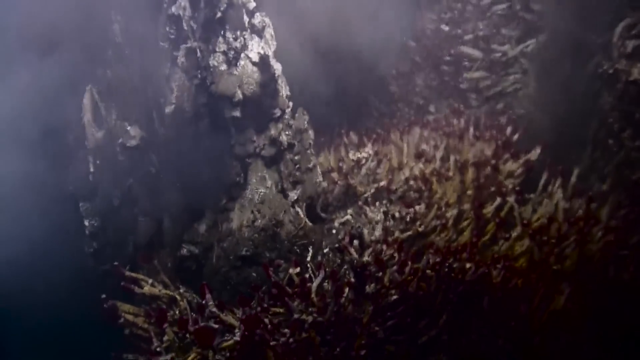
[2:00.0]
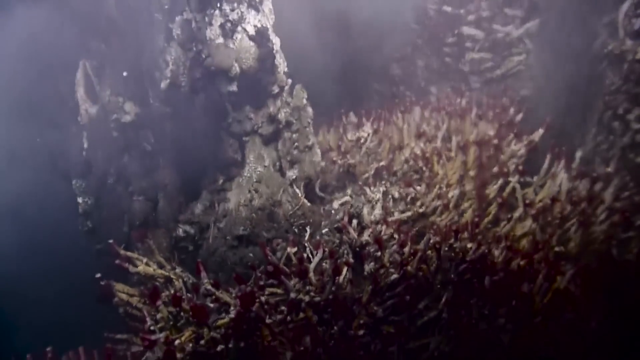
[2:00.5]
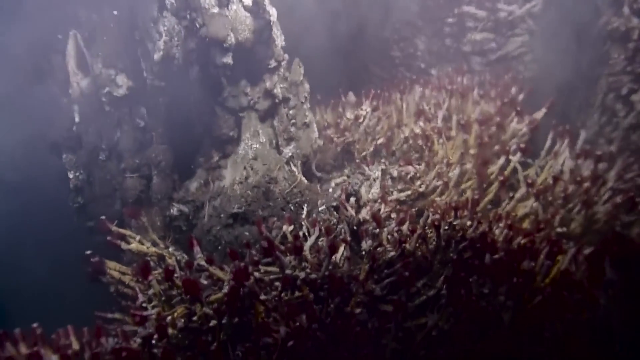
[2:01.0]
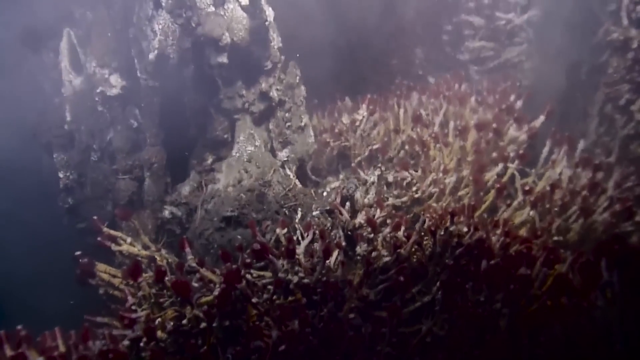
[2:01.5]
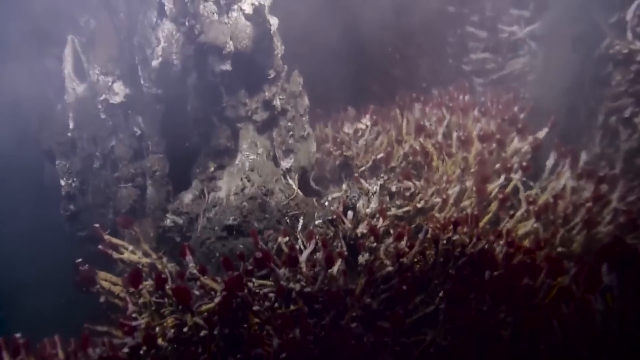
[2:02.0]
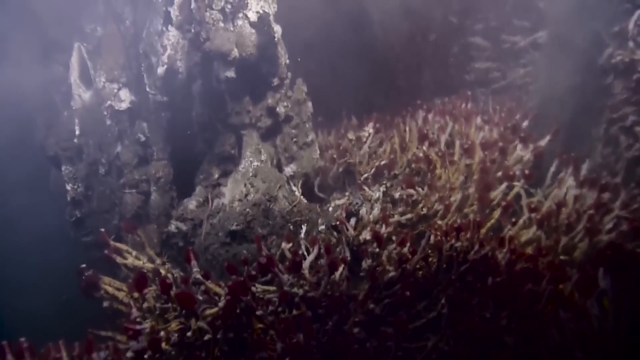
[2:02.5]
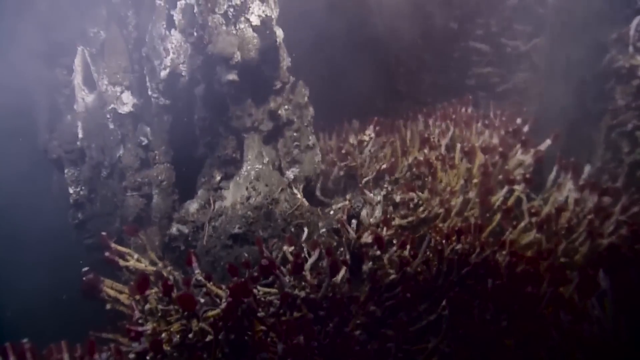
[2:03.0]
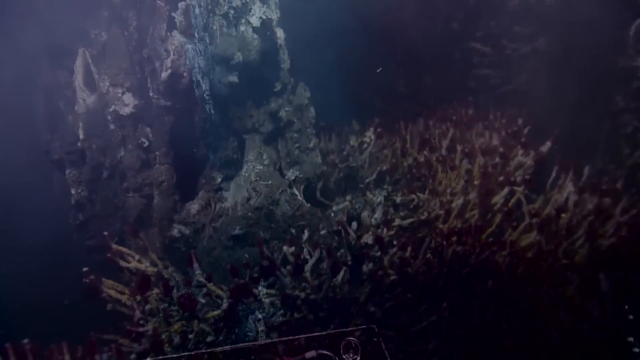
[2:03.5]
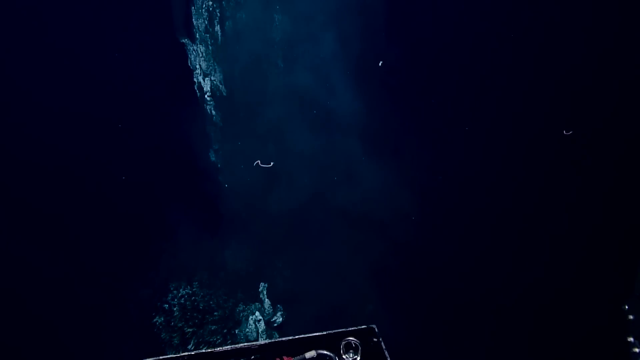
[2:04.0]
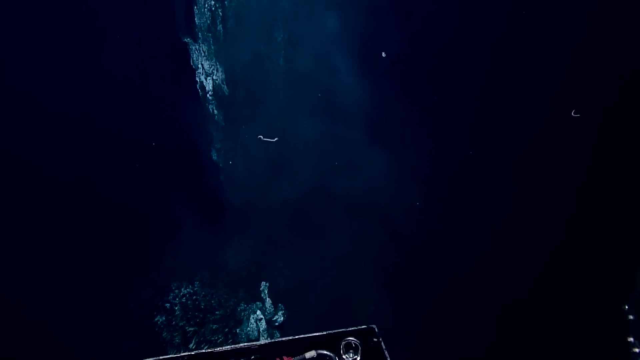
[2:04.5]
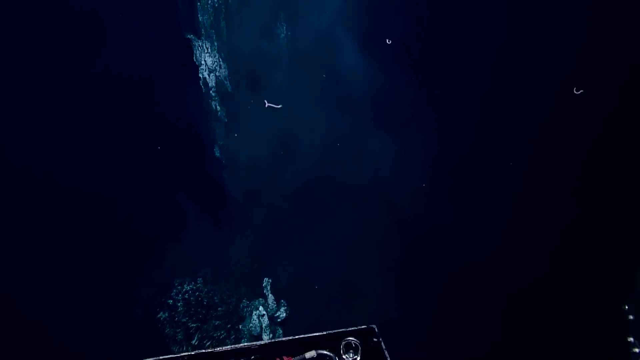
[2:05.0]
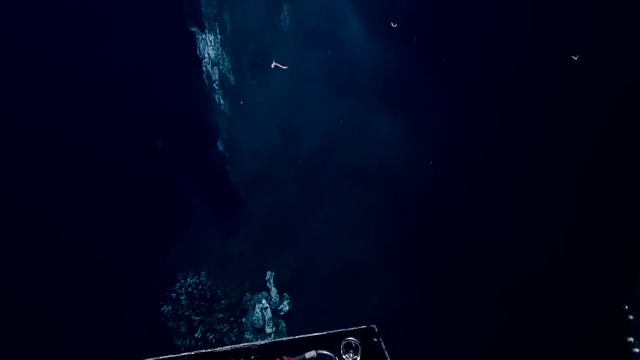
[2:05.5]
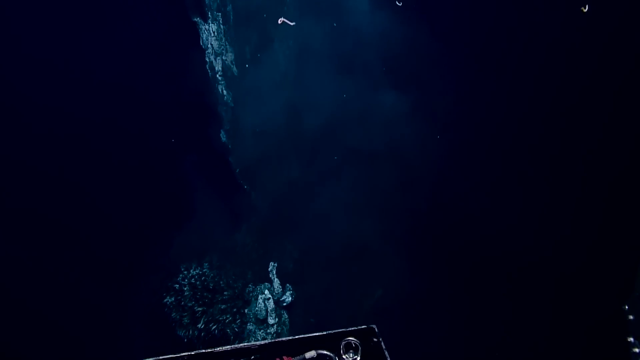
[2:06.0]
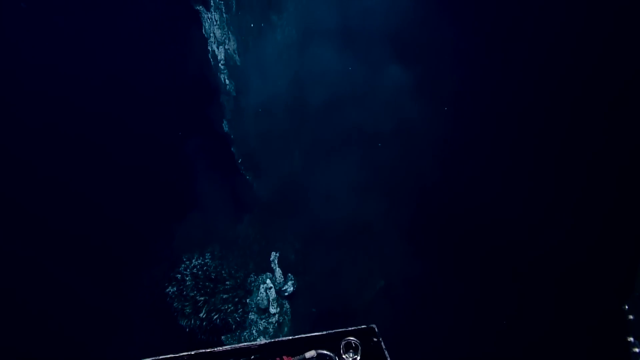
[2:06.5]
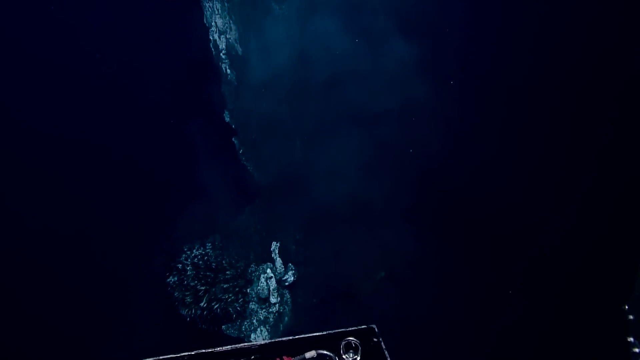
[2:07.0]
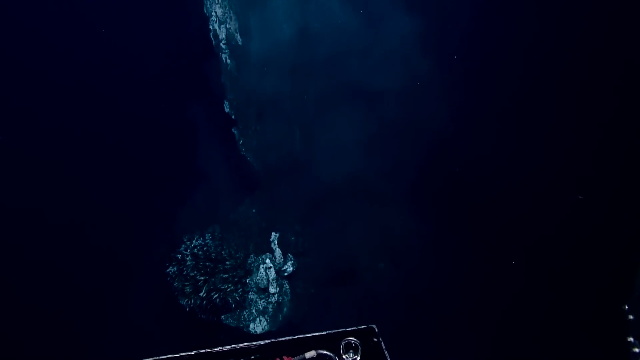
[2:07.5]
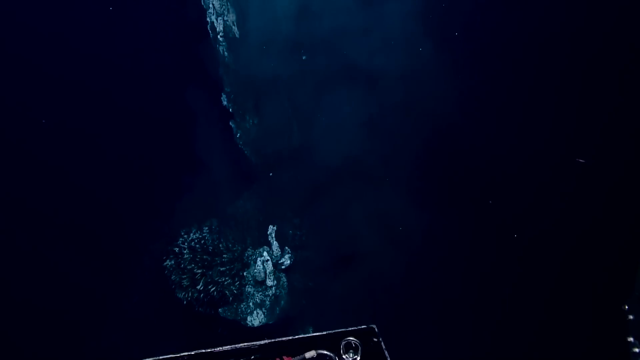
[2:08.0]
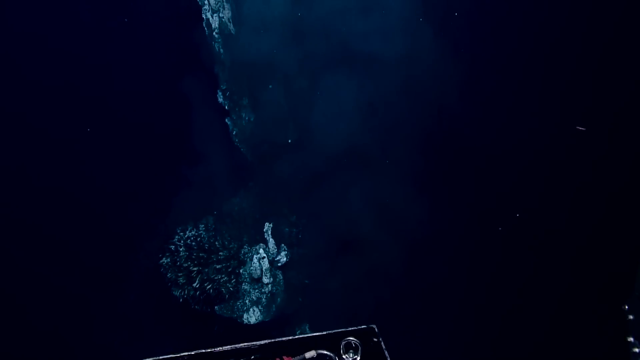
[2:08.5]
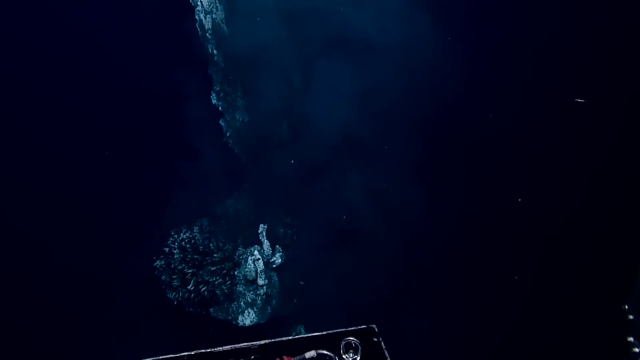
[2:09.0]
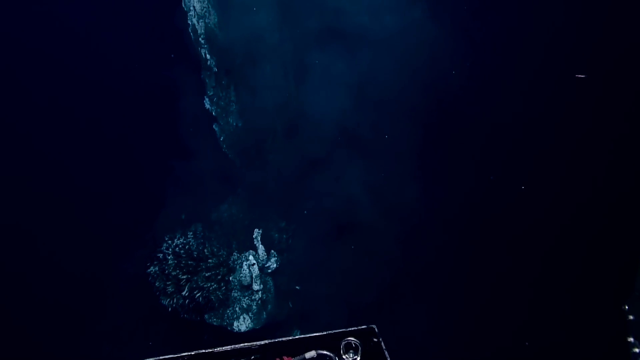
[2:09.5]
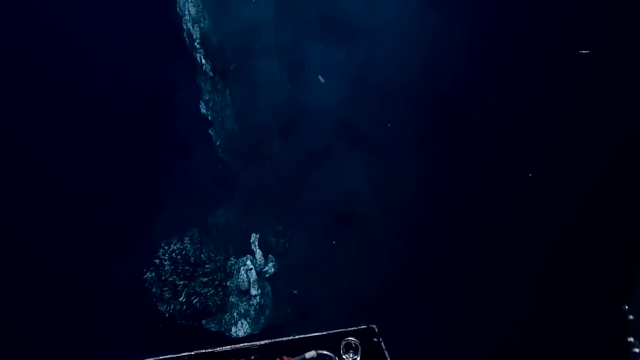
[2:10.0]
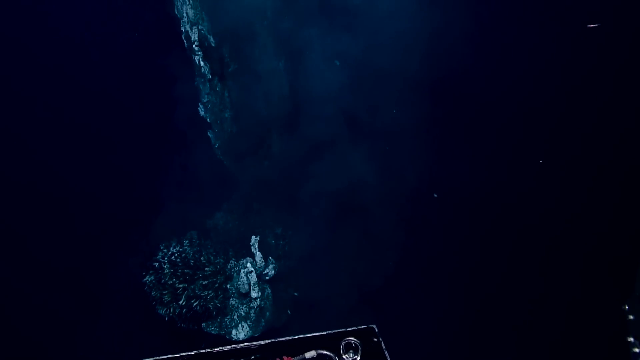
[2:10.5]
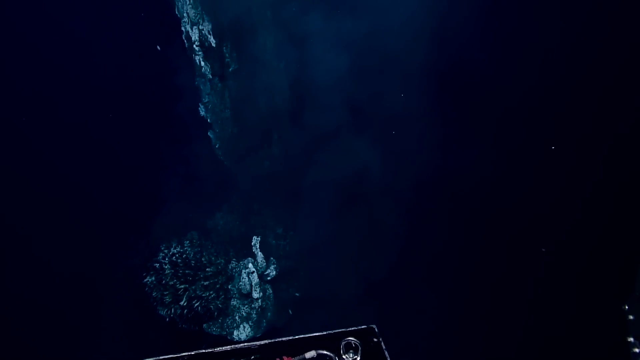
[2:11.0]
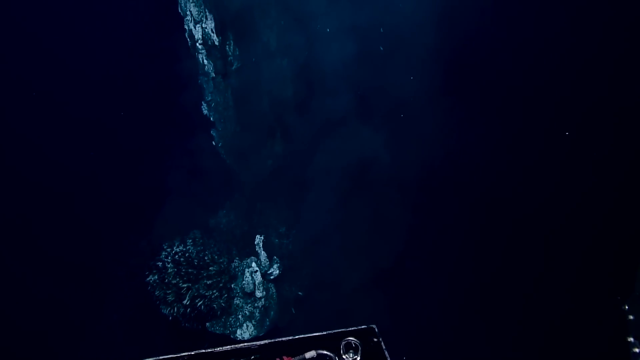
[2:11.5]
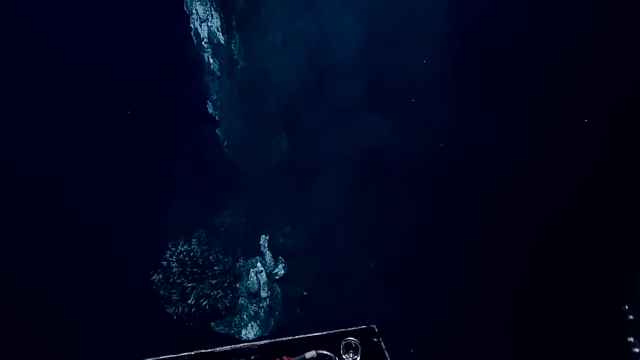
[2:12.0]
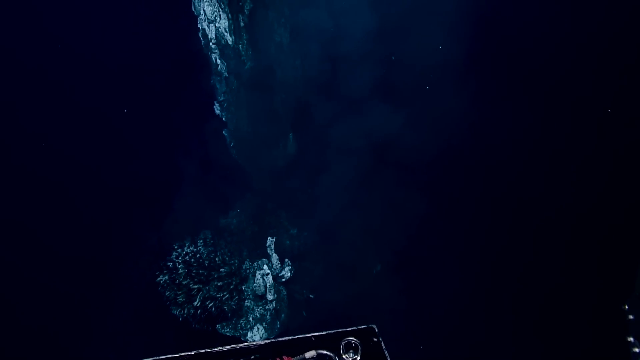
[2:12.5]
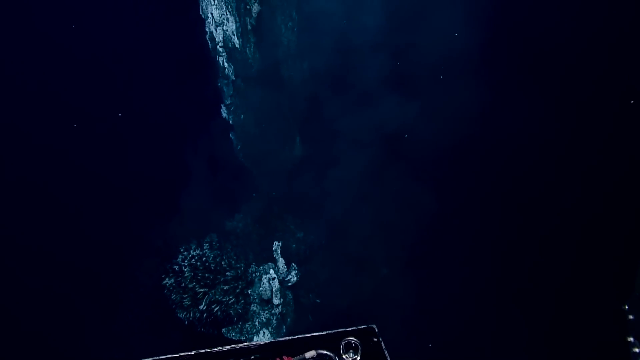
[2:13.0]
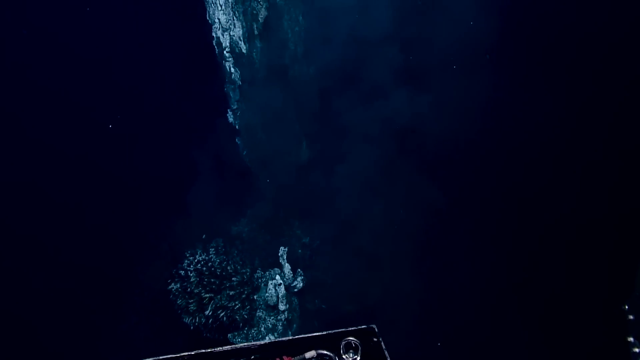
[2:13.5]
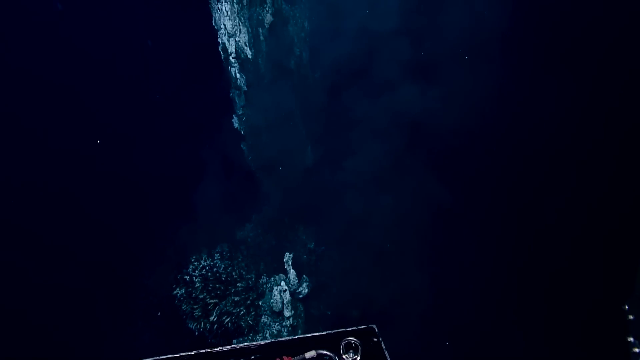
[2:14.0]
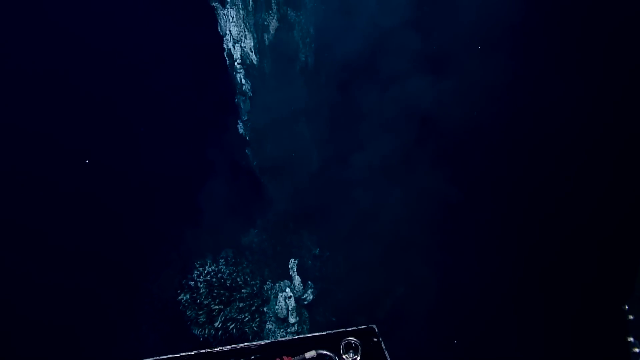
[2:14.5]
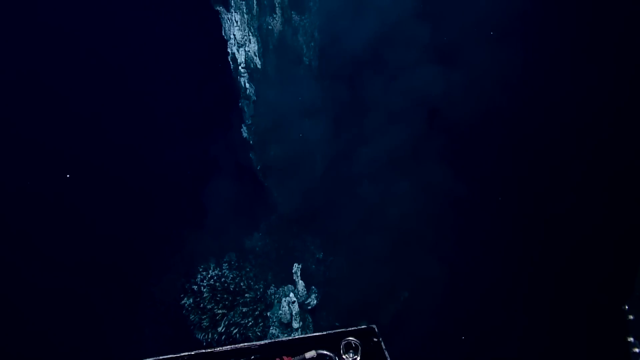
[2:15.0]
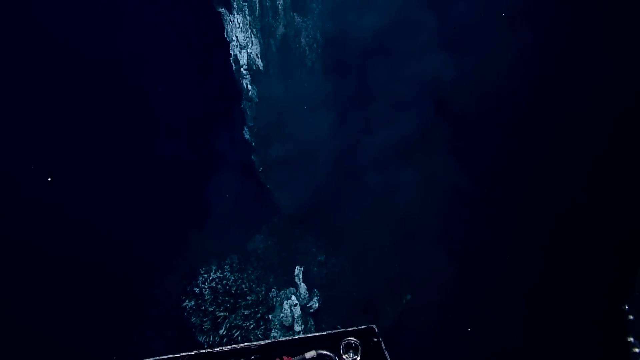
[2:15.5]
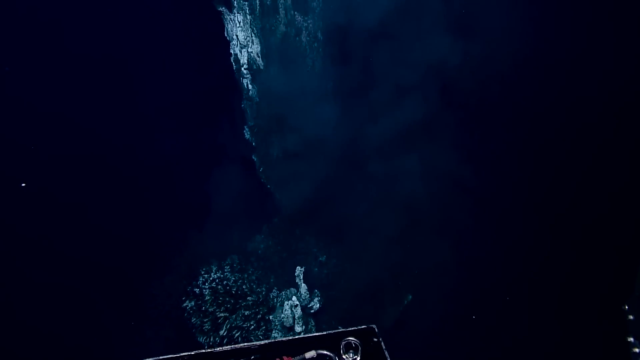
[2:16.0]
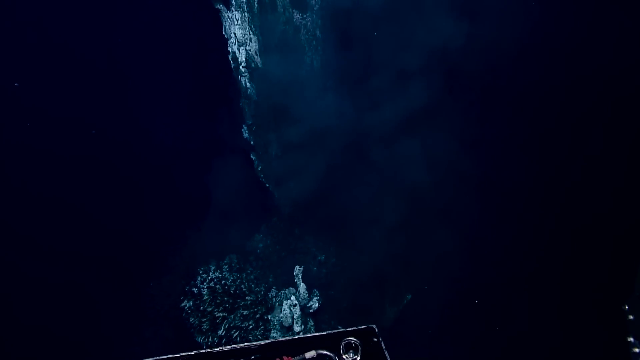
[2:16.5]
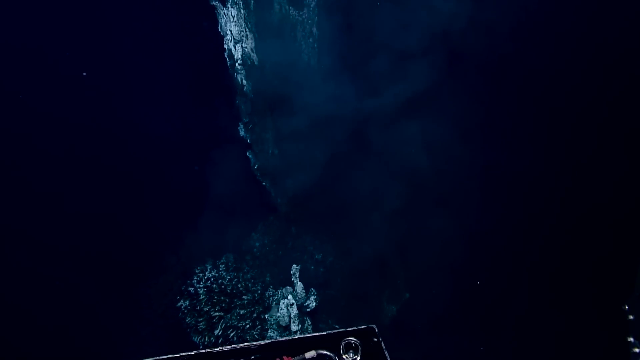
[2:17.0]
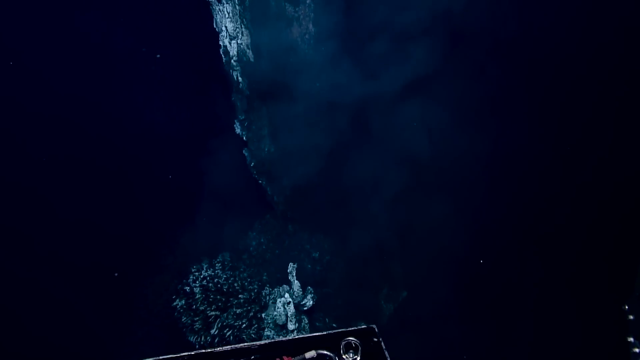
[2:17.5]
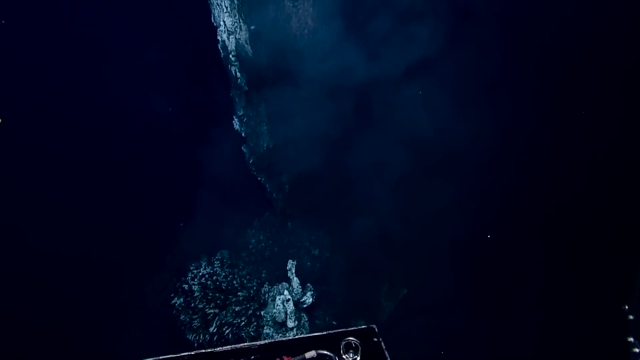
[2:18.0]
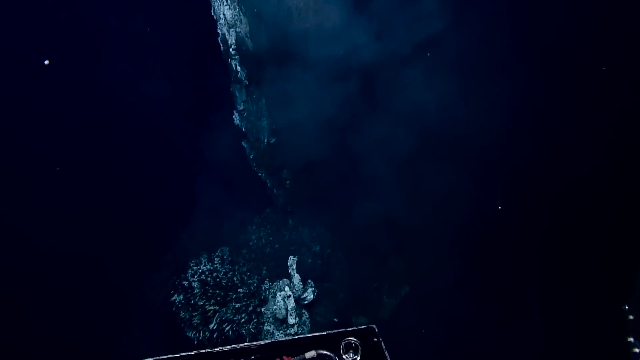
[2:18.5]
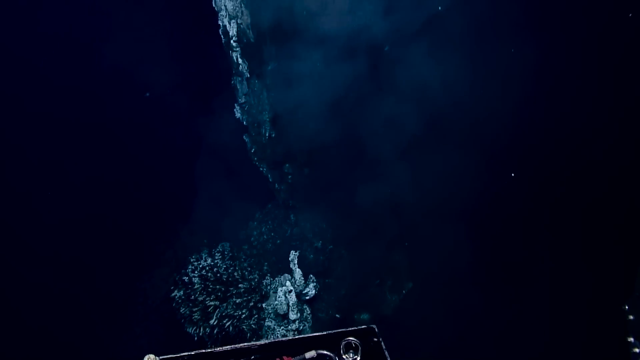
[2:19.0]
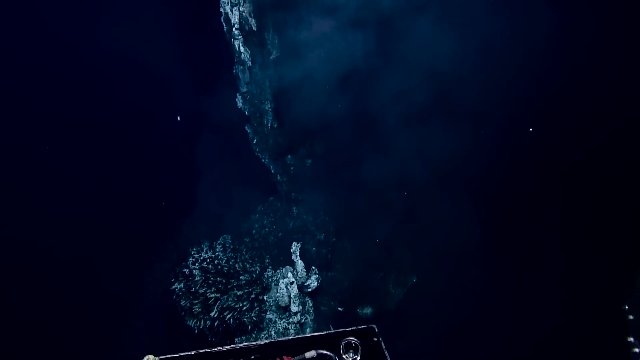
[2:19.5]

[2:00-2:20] Deep underwater, there is what looks like yellow and red coral around what looks like a rock. The rock looks rusty, white and dark grey, and is quite round and long. The visuals look distorted, like a heat shimmer or heat haze. The coral moves slowly left and right. Then another part of the ocean floor appears, with a large rock and tiny white creatures that look like worms moving up through what looks like a blue light shining on them. Dark blue coral is down below. The creatures keep moving up, and what looks like a bit of smoke is in the background, though most of the background is very dark.